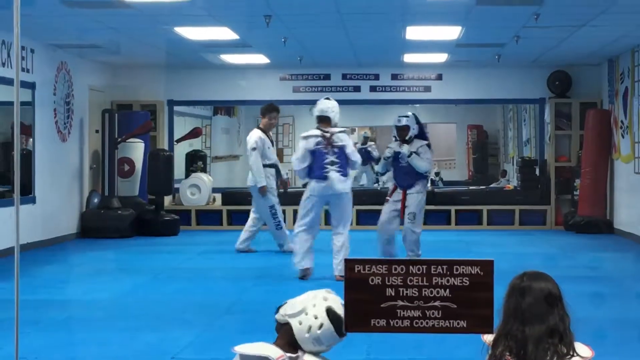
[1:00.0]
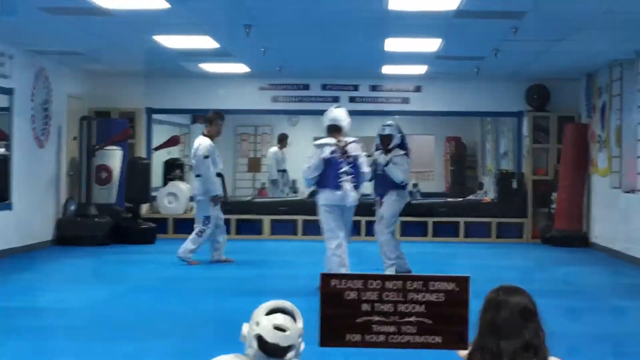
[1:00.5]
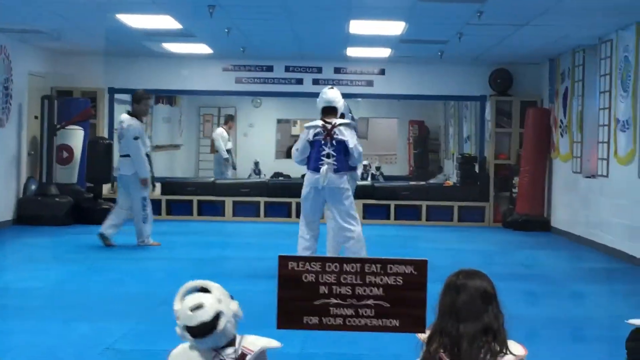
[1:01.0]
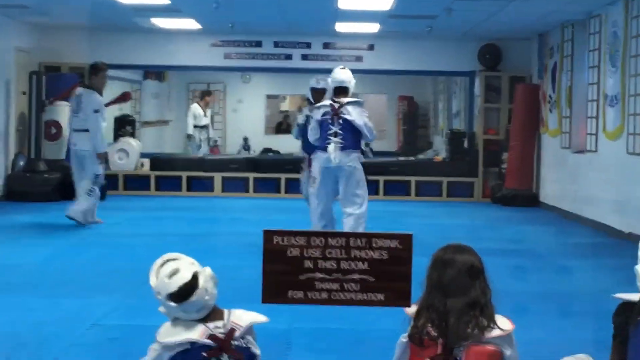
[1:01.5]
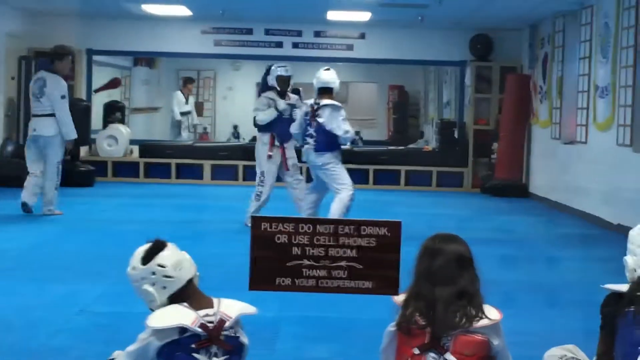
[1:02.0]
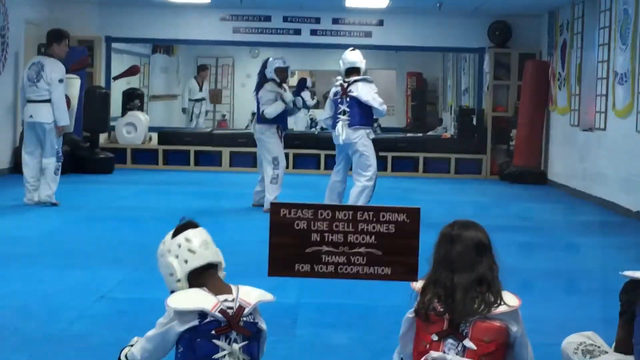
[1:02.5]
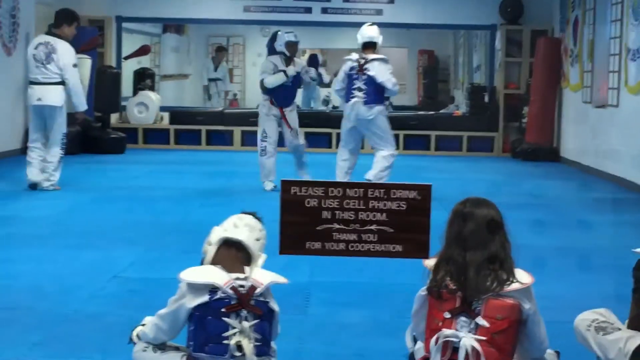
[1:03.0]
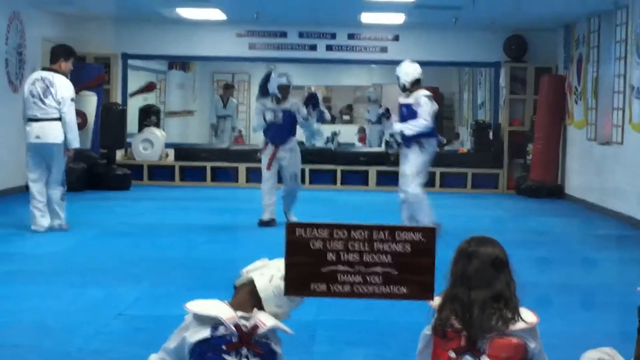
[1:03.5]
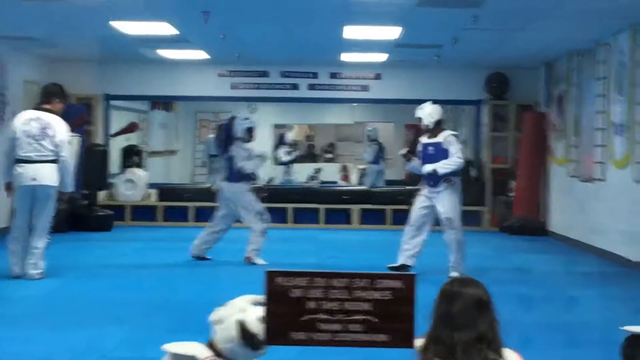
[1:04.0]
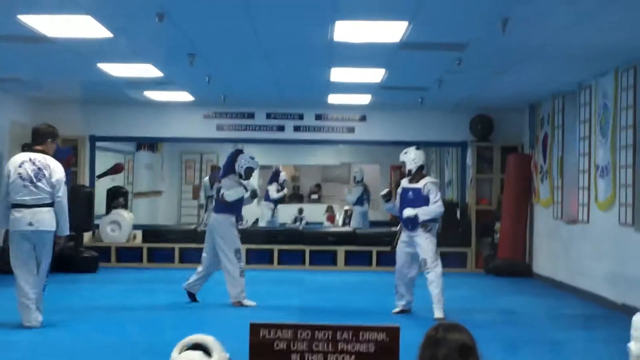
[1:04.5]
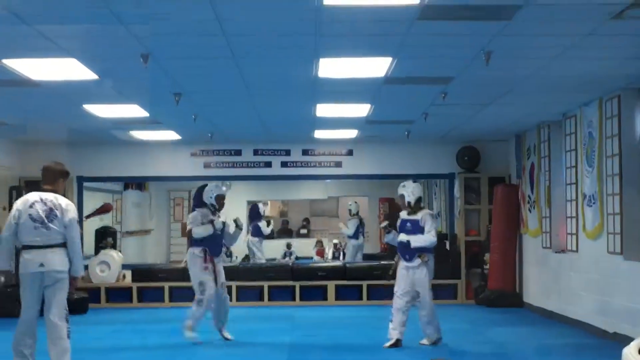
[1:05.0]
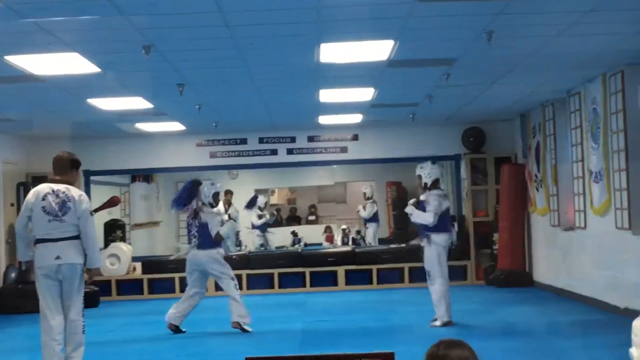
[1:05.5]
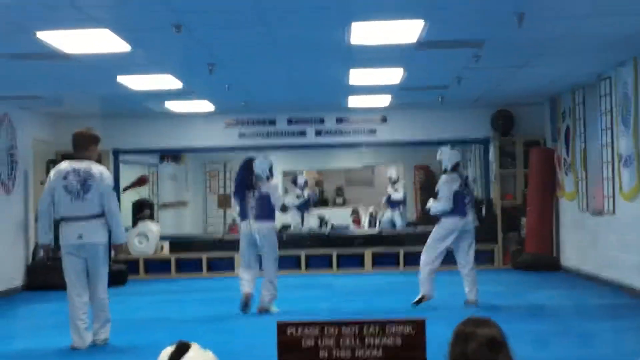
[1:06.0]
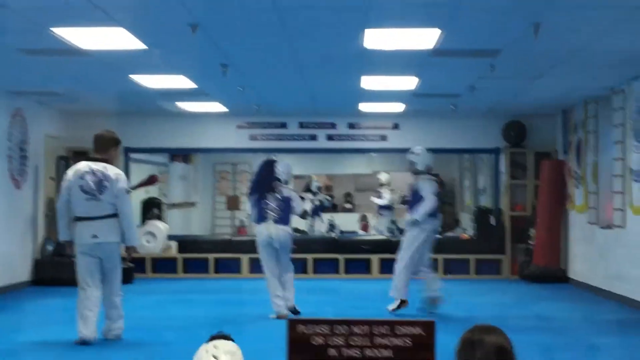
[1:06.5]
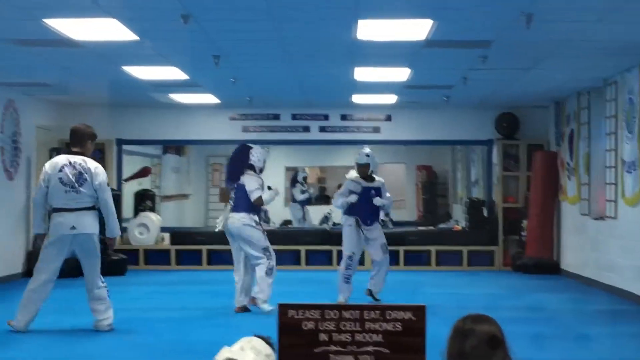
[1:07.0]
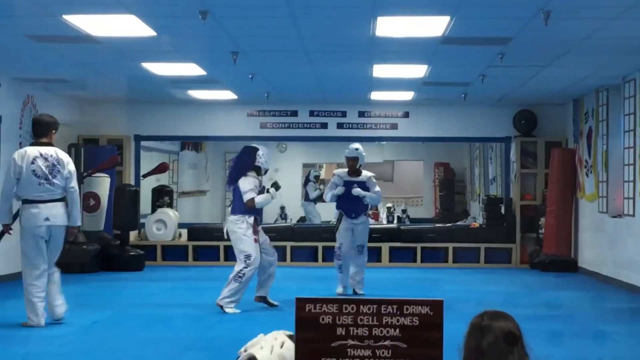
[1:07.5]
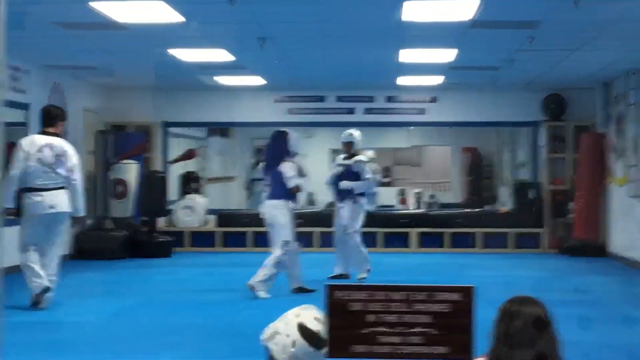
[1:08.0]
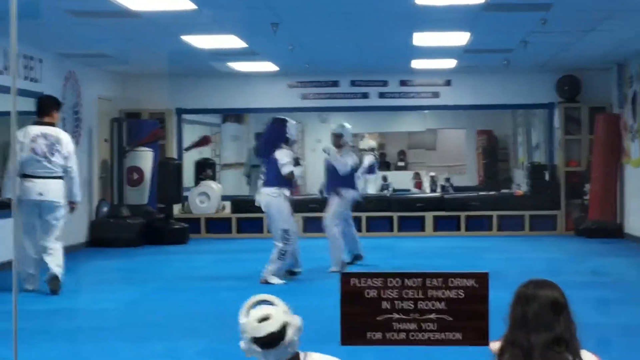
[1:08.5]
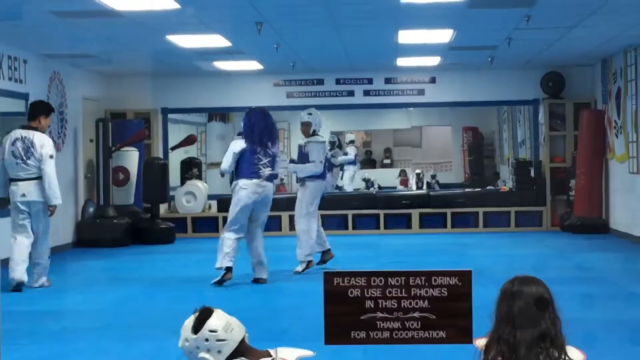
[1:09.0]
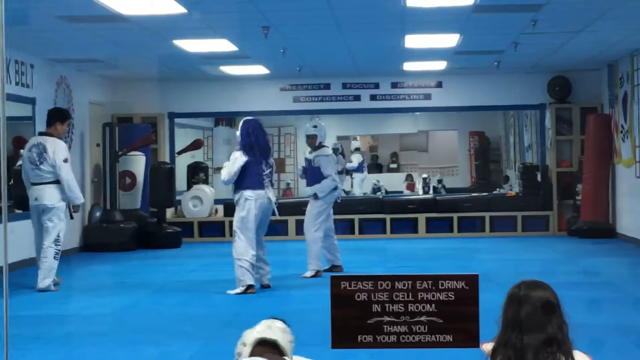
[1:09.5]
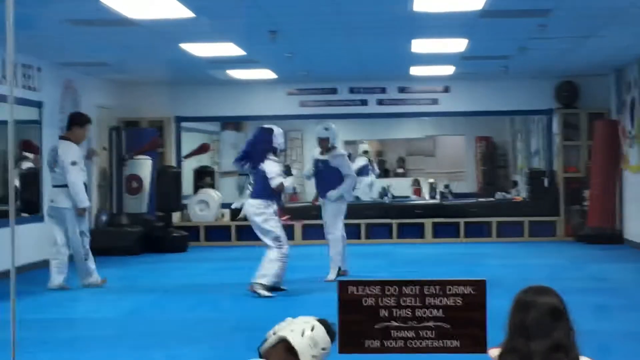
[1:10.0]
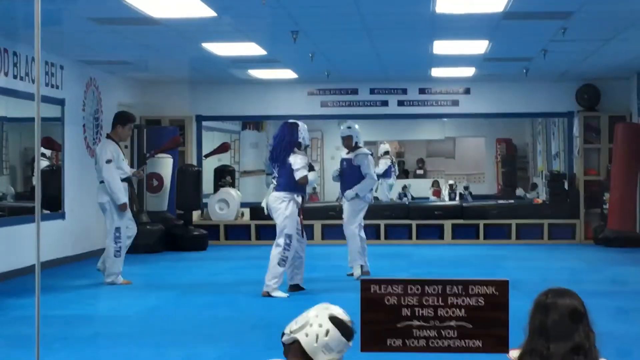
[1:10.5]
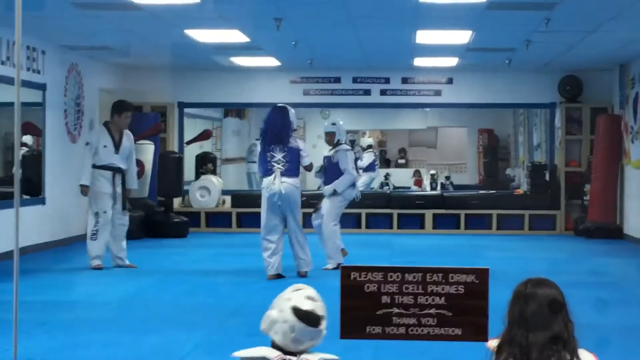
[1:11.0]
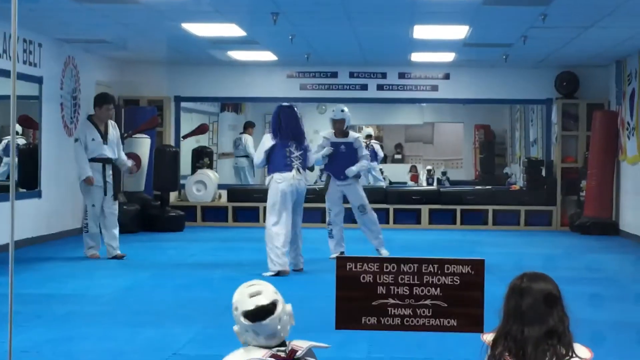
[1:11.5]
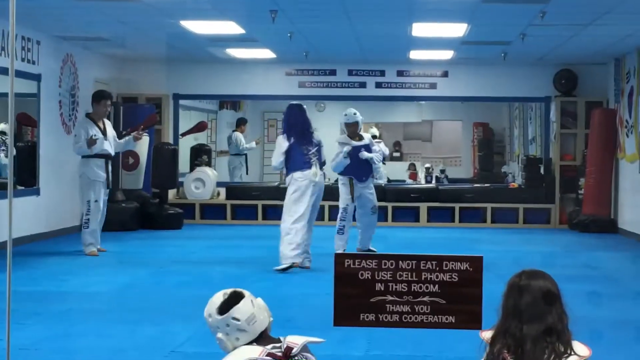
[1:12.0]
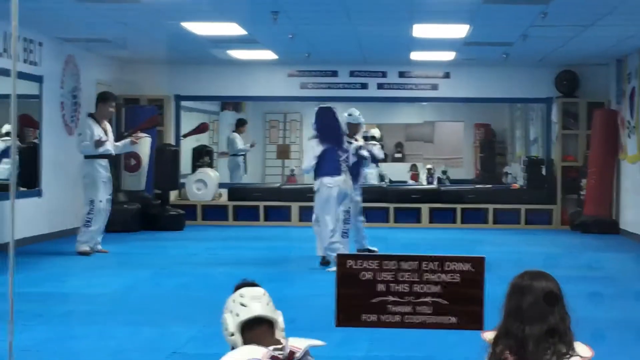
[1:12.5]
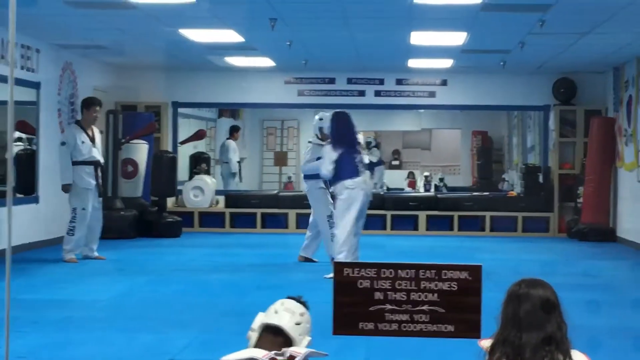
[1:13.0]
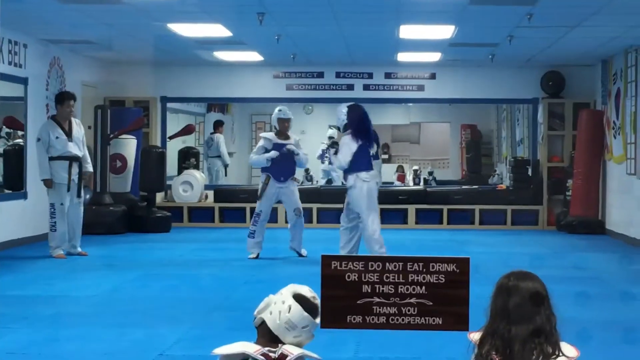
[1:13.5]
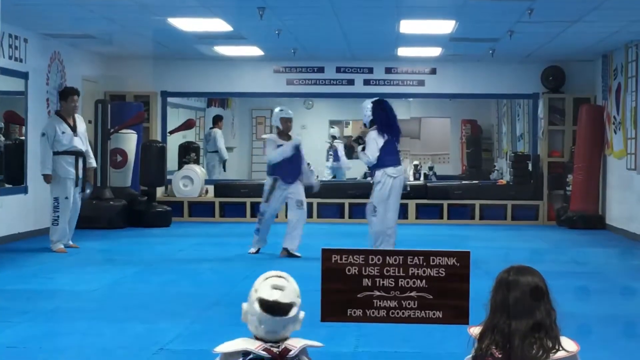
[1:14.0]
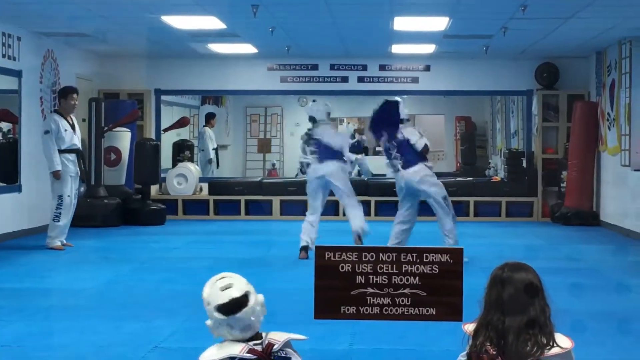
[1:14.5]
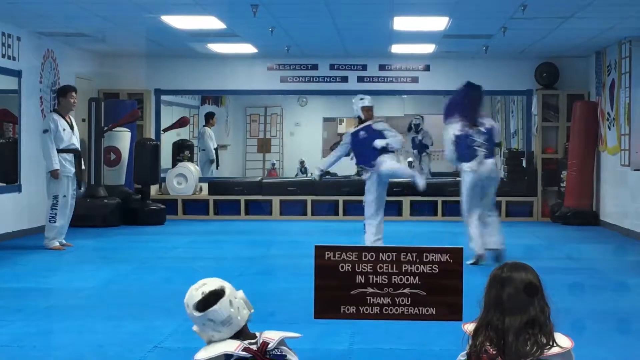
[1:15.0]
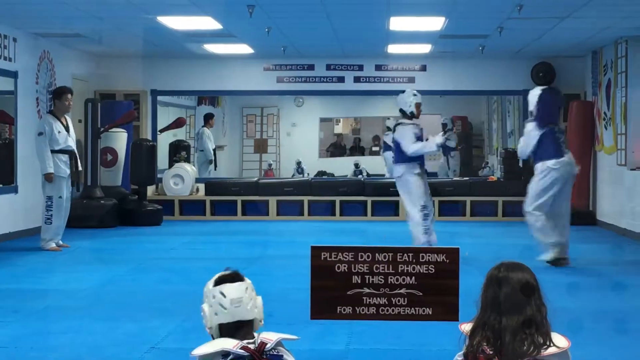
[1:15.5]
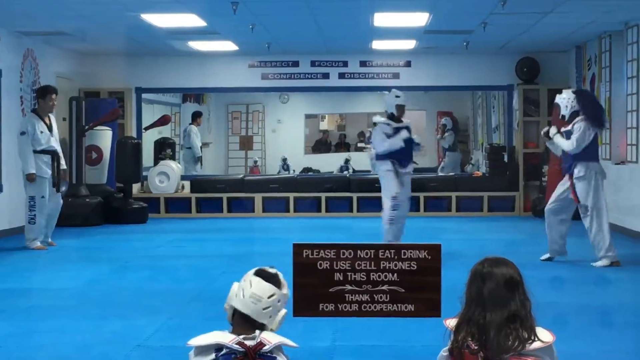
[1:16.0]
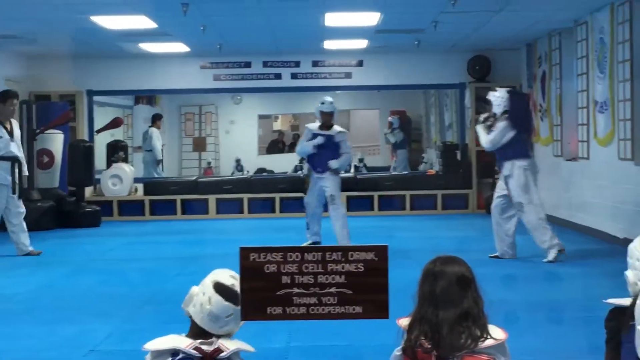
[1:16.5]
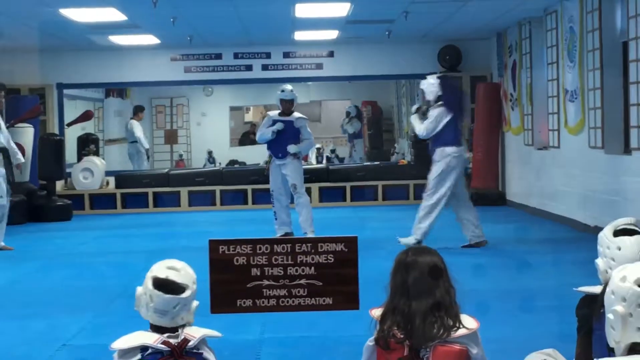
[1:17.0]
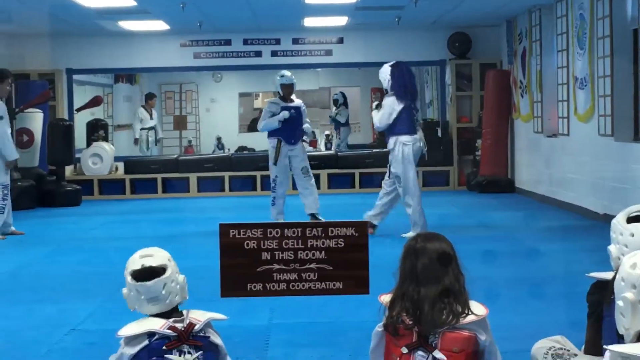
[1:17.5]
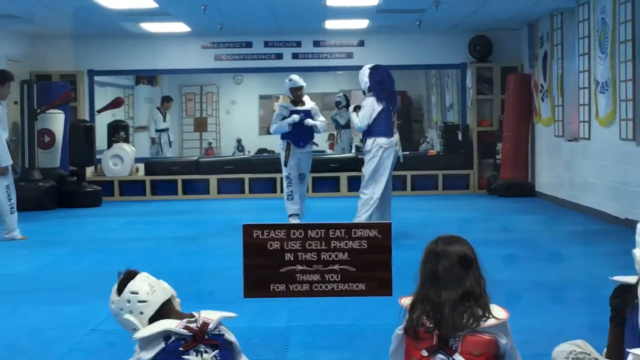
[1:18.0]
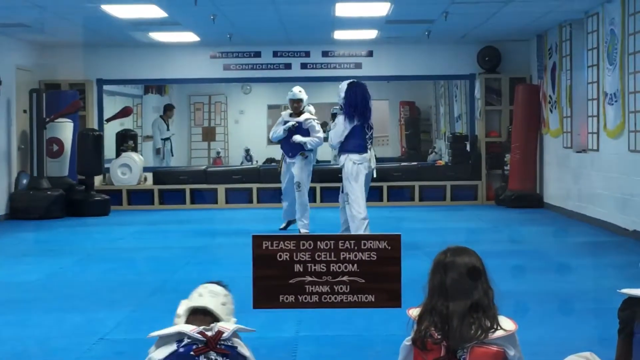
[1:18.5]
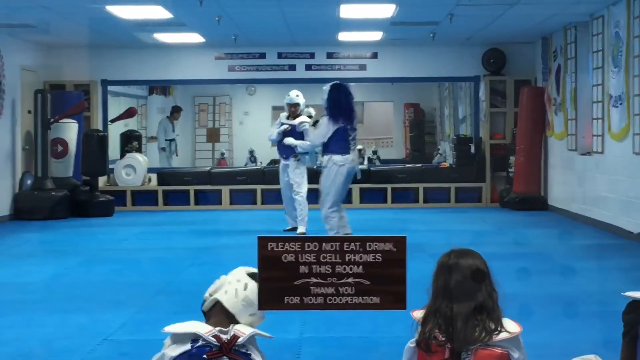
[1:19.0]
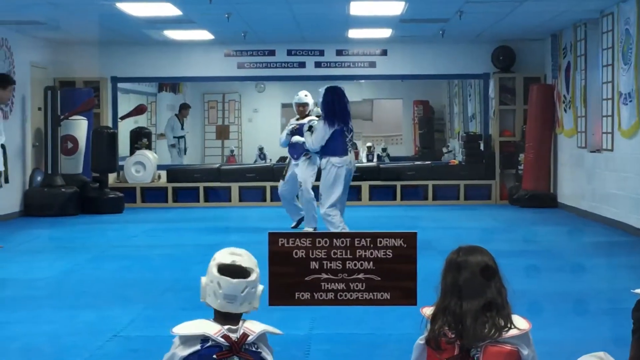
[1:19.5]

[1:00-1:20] The same scene continues. The instructor starts on the left, watching the two fighters, and wears a white outfit with a black belt. The two fighters also wear white outfits, with what appears to be a very blue safety vest on their chests, and both have white headgear on; the one on the right apparently has a red belt. They stand on what appears to be soft, very blue flooring. There are two mirrors in the room, one in the background and one on the far left, each with a bluish border. The two fighters look toward each other, trying to time their hits, while the instructor sort of circles around to give them freedom of movement as they keep trying to strike and protect themselves. They sort of spin kick as the children and other fighters watch. At the bottom middle is a sign reading "please do not eat drink or use cell phones in this room thank you for your cooperation." Above the middle mirror are five rectangular signs that say "respect", "focus", "defense", "confidence", "discipline".